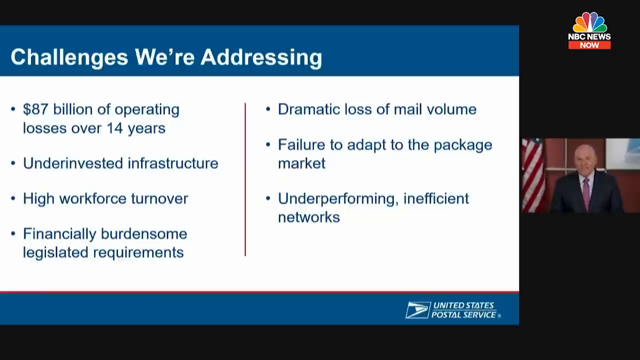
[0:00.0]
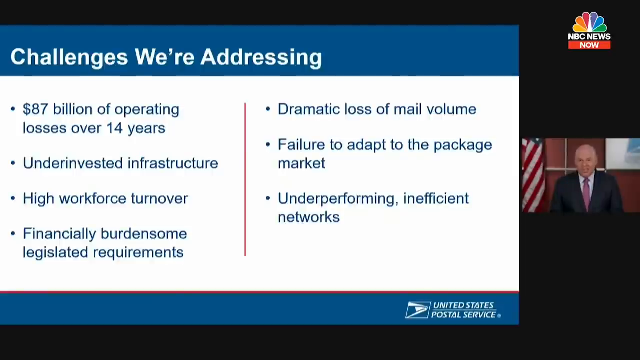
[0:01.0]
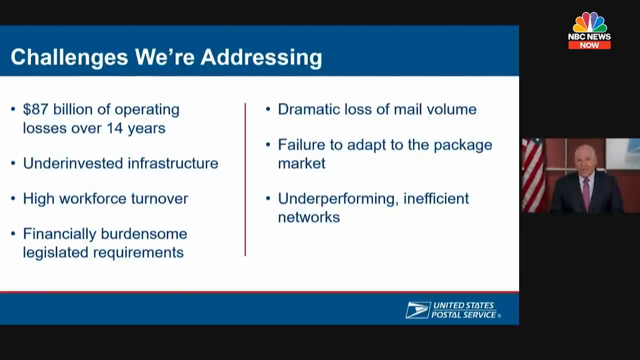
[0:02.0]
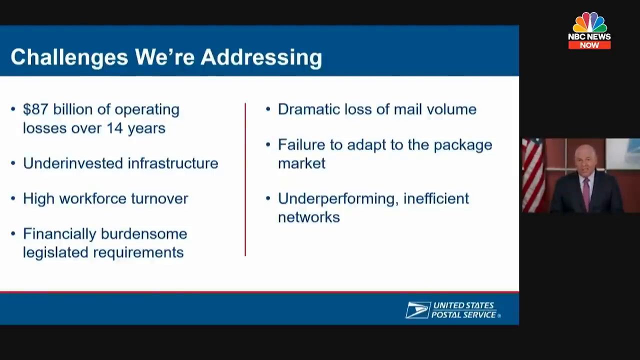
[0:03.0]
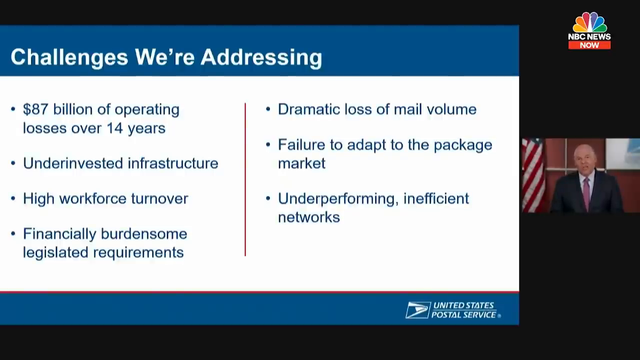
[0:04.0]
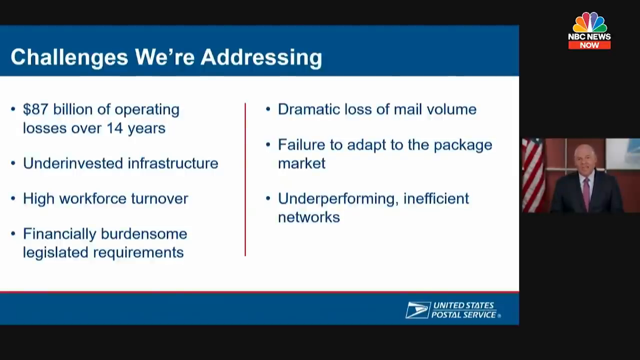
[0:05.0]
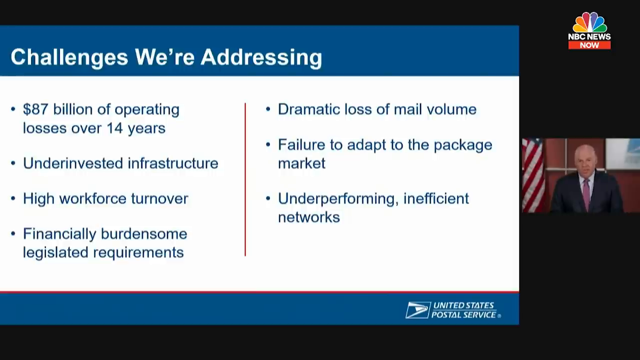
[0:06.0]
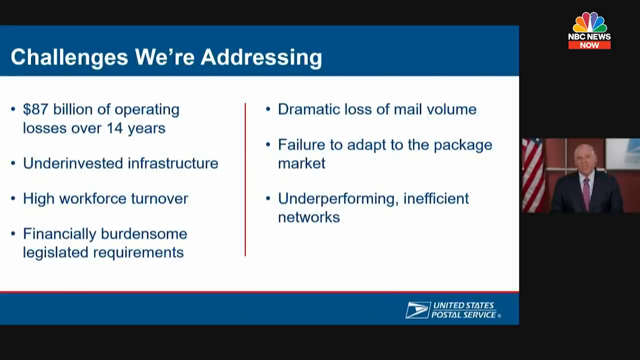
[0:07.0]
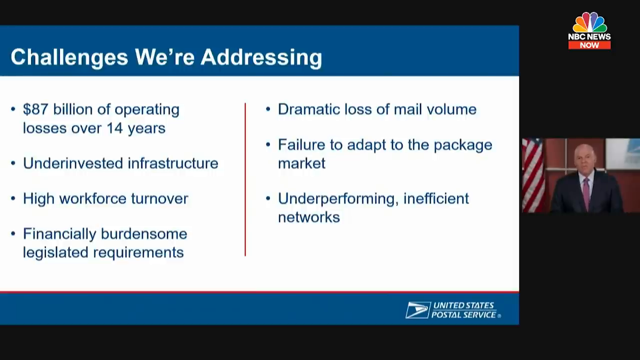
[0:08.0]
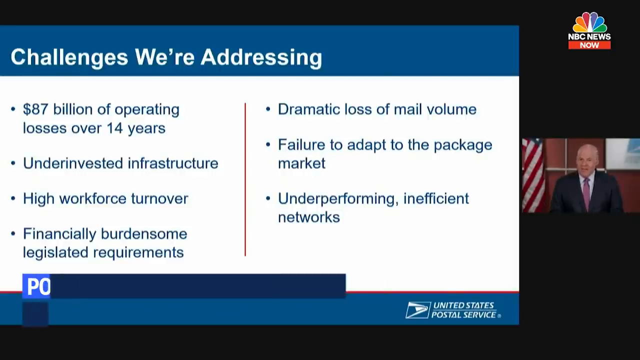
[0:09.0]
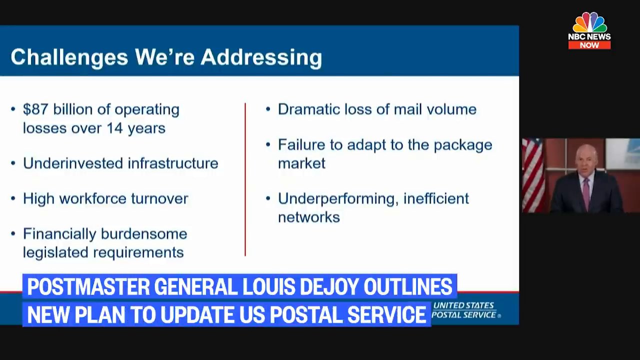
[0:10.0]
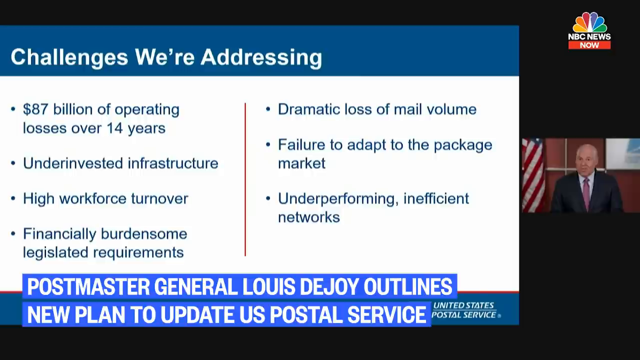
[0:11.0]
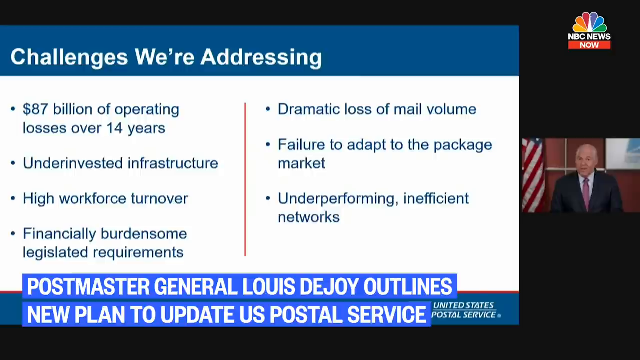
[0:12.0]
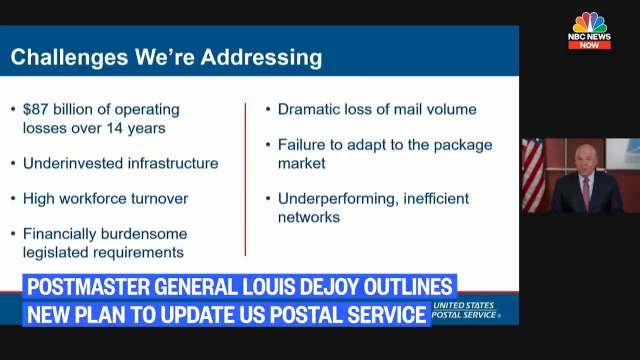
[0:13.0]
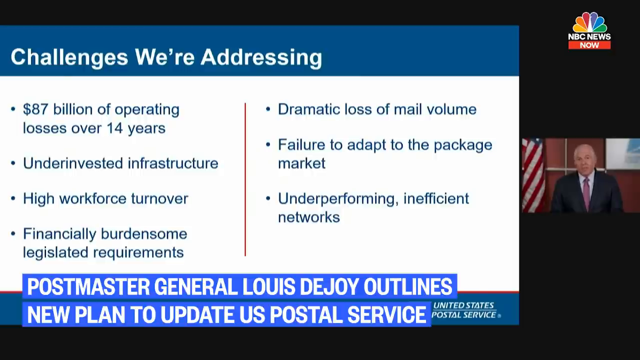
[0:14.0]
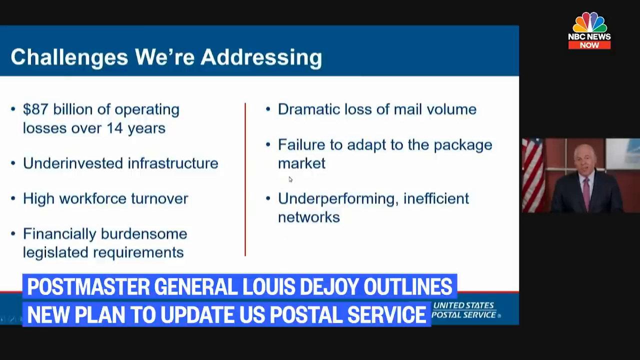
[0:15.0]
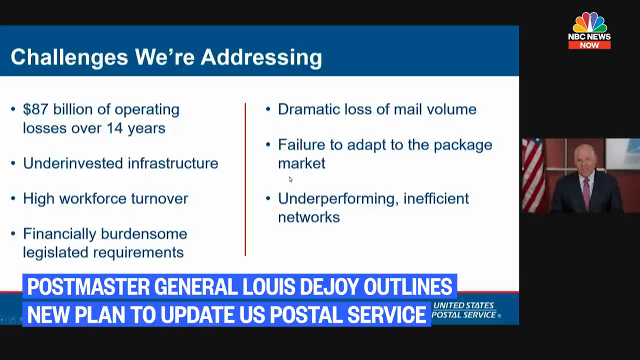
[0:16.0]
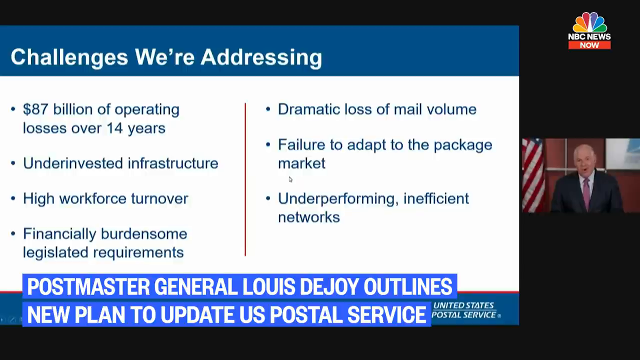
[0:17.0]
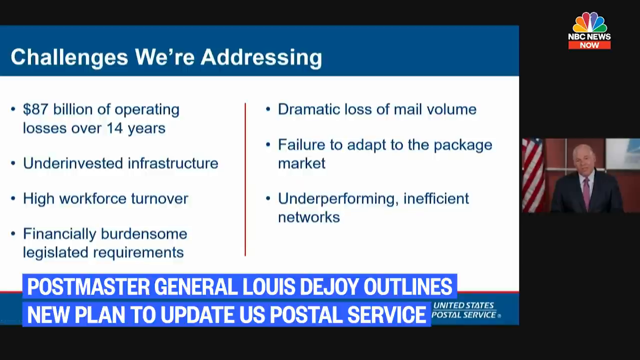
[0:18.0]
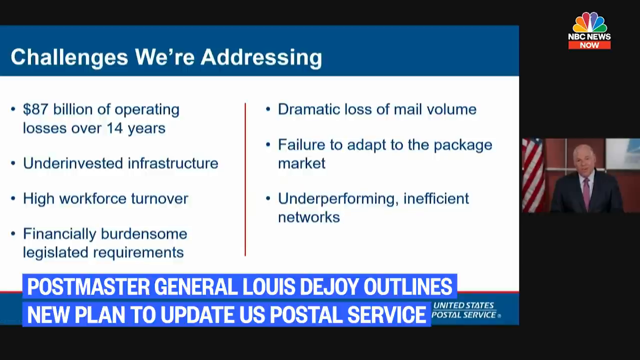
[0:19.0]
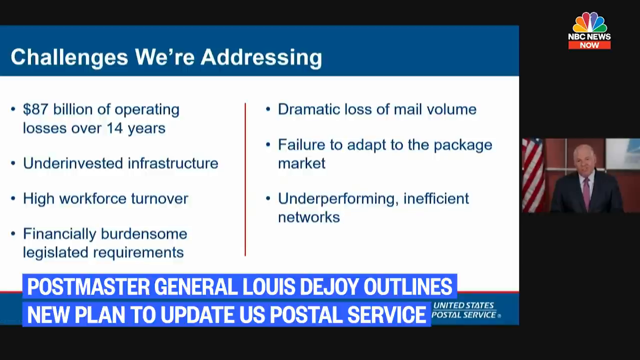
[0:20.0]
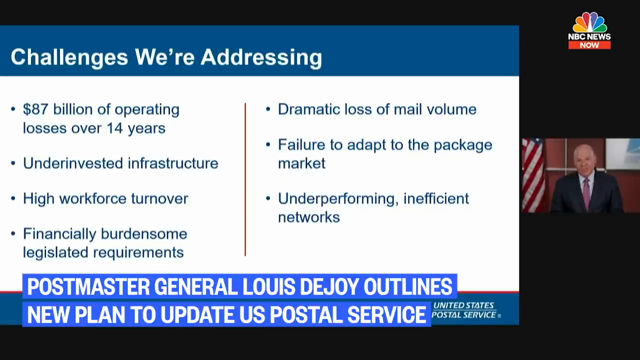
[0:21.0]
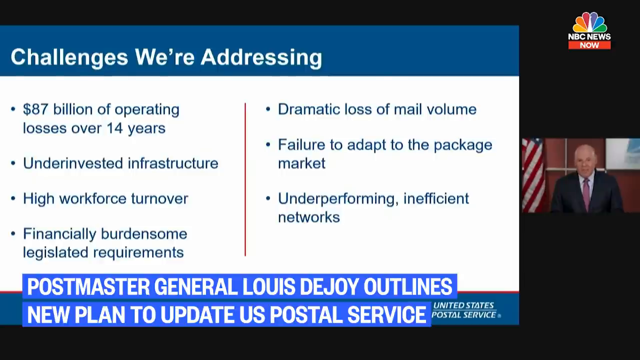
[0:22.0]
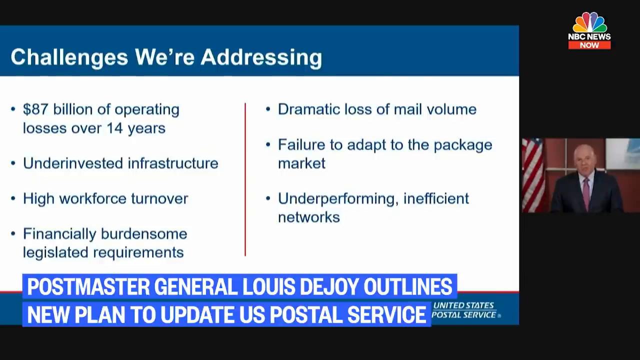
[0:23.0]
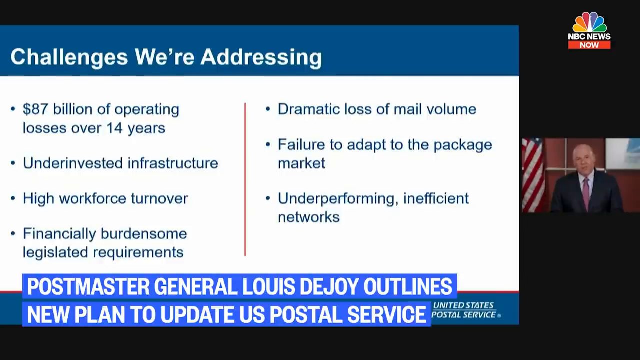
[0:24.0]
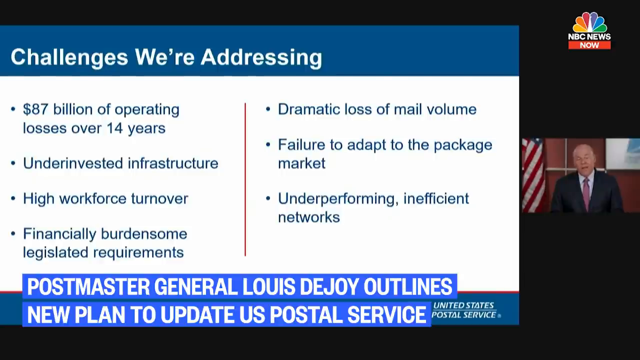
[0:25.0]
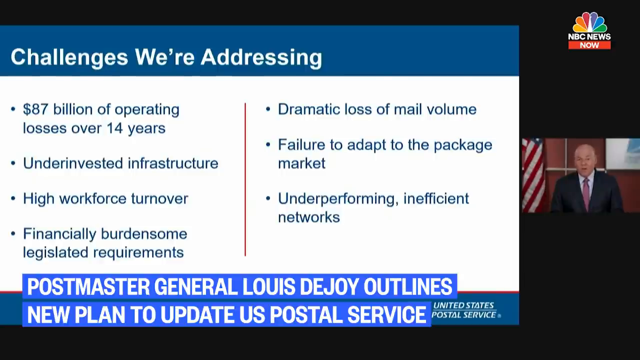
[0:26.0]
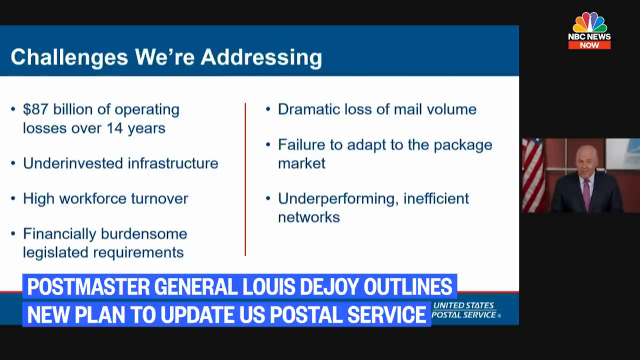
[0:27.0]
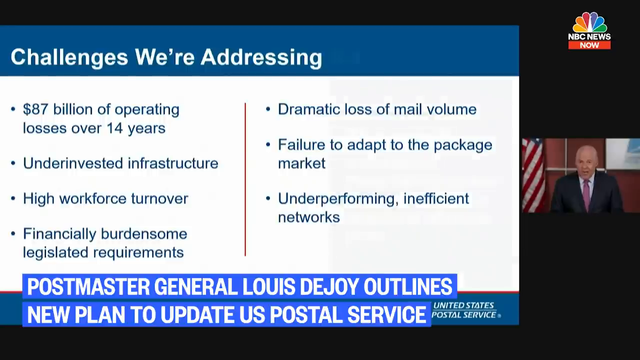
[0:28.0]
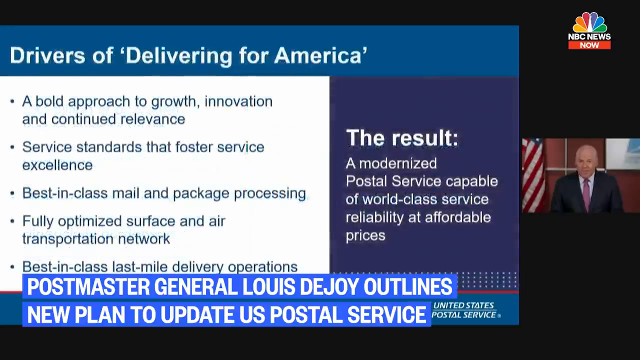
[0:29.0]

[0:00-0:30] A news segment displays a post by the United States Postal Service. The post reads: "challenges we're addressing, pay $7 billion of operating losses over 14 years, underinvested infrastructure, high workforce turnover, financially burdensome legislative requirements, dramatic loss of mail volume, failure to adapt to the package market, underperforming inefficient networks." At the top of the slide is a blue banner with the words "challenges we're addressing" written in white. Below it, the main content of the slide has a white background with a red line in the middle. At the bottom is another blue border, with a red line separating the white area from the blue border. The United States Postal Service logo is on the bottom right. On the right side of the screen, a reporter speaks to the camera with an American flag behind him. The words "Postmaster General Lewis DeJoy outlines new plan to update U.S. Postal Service" appear.